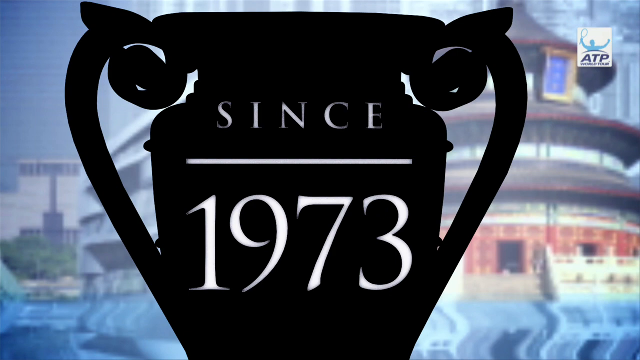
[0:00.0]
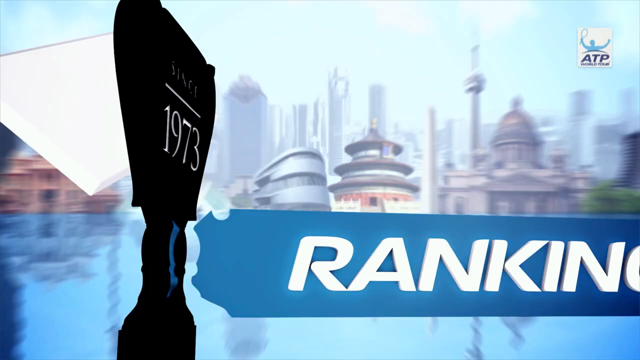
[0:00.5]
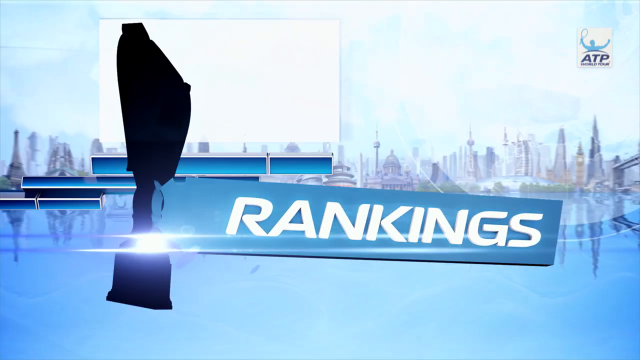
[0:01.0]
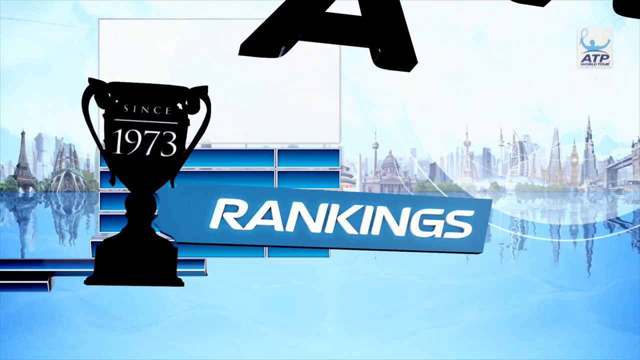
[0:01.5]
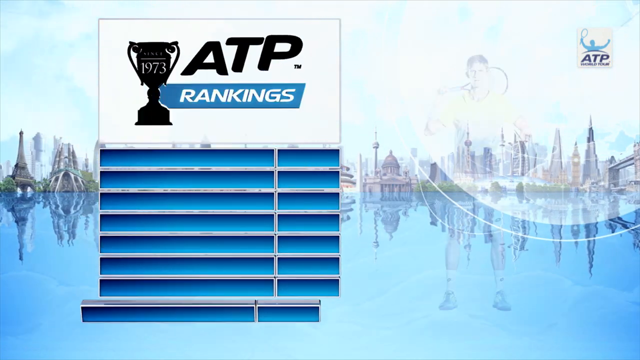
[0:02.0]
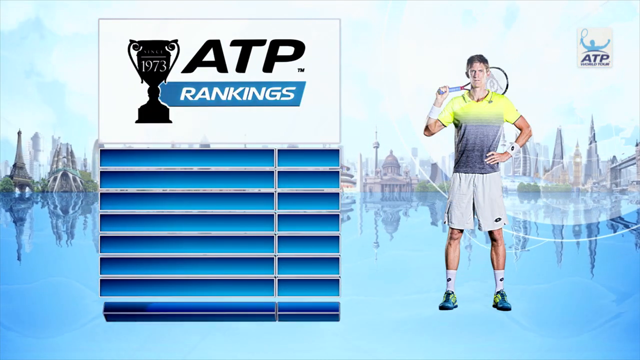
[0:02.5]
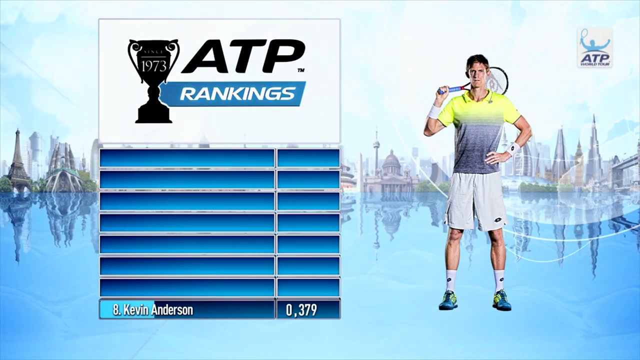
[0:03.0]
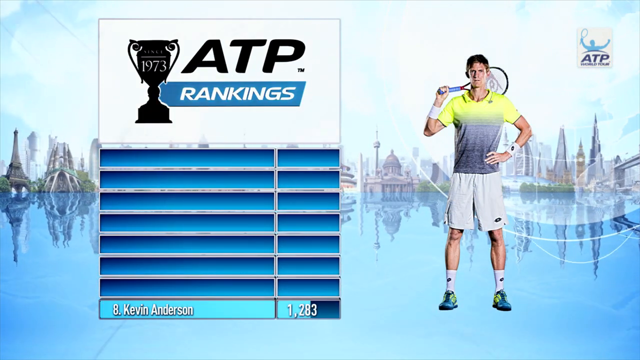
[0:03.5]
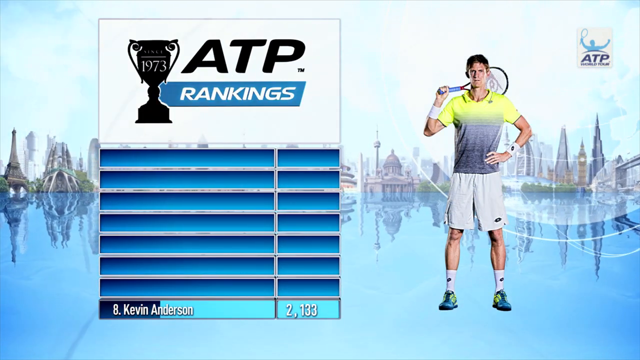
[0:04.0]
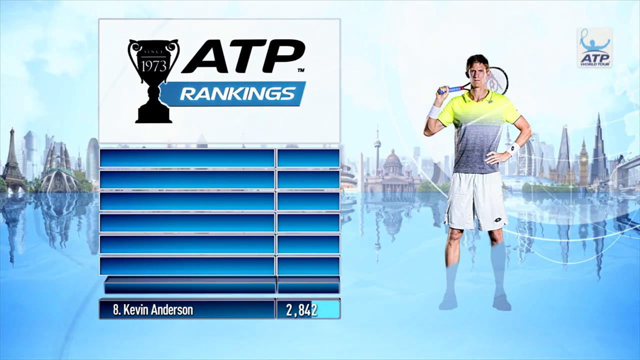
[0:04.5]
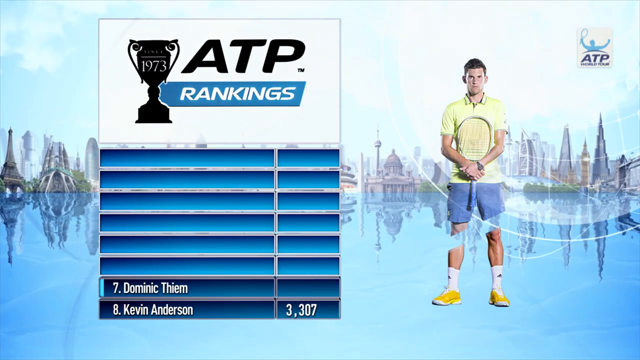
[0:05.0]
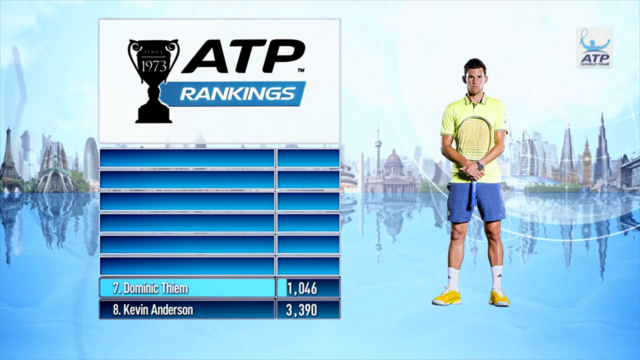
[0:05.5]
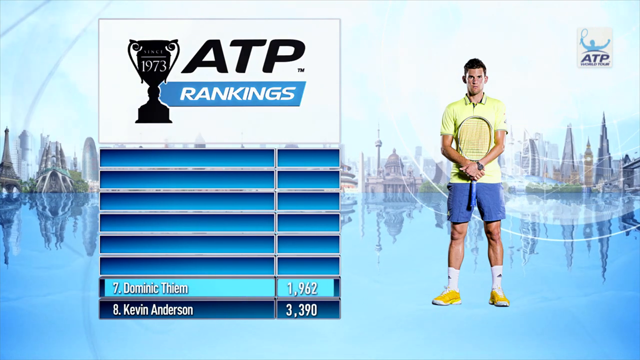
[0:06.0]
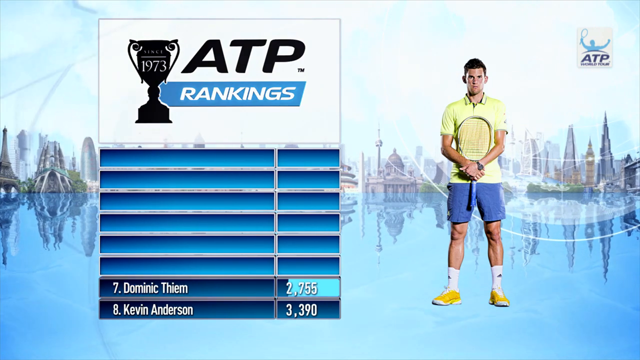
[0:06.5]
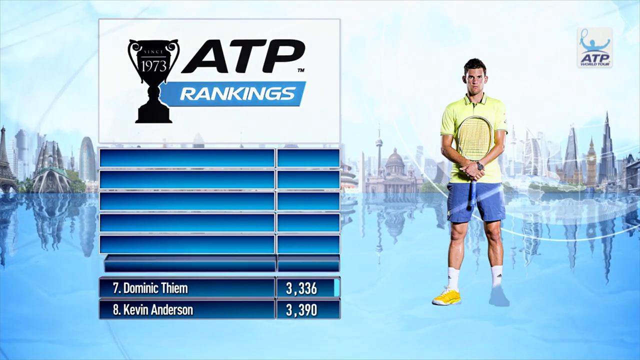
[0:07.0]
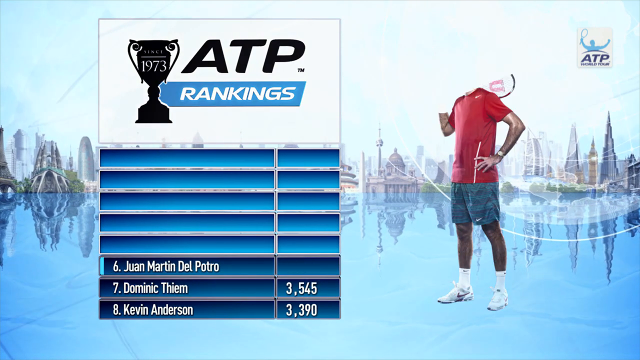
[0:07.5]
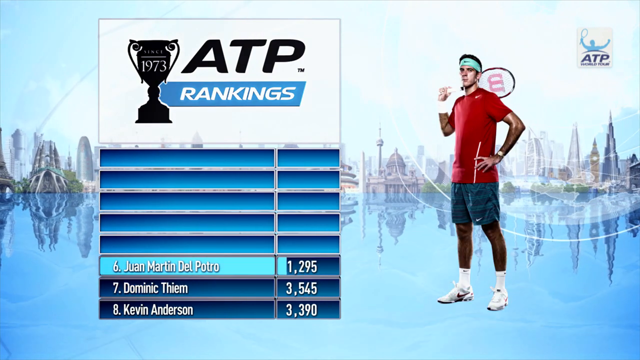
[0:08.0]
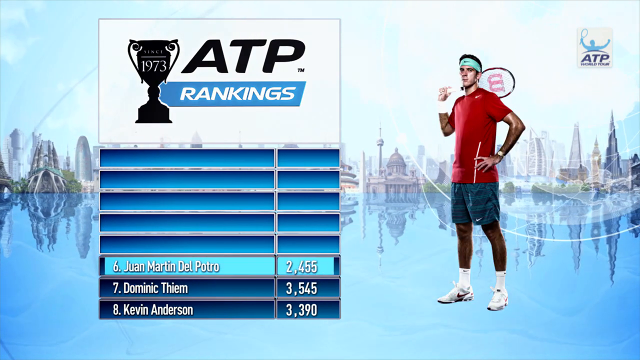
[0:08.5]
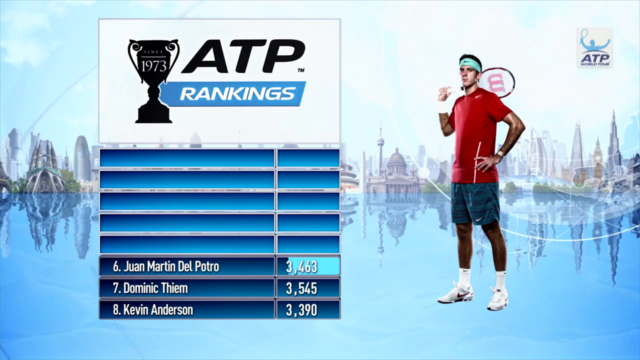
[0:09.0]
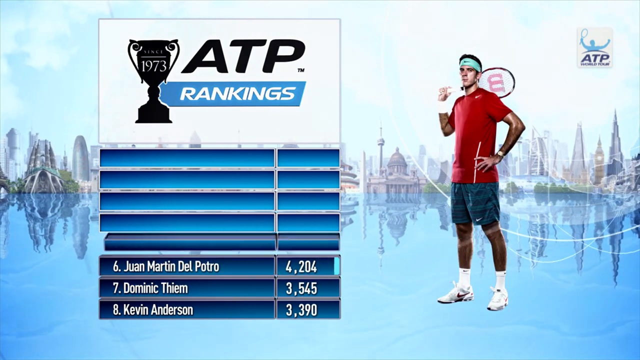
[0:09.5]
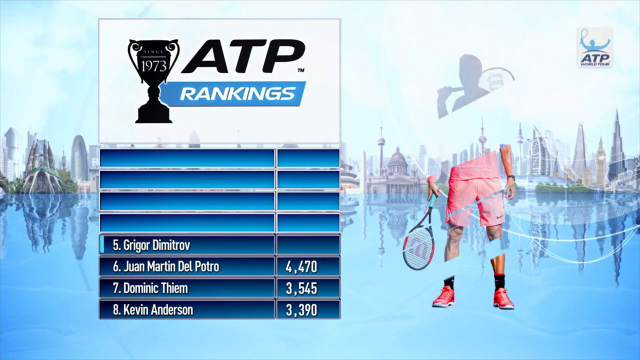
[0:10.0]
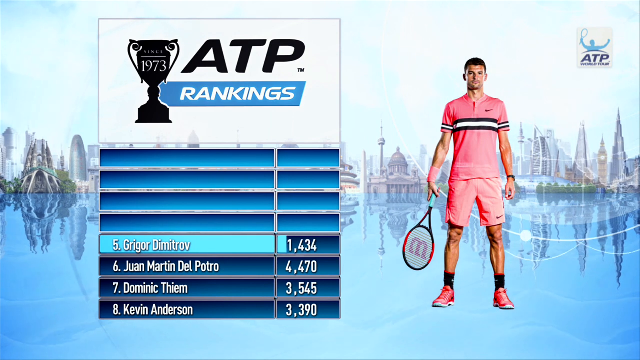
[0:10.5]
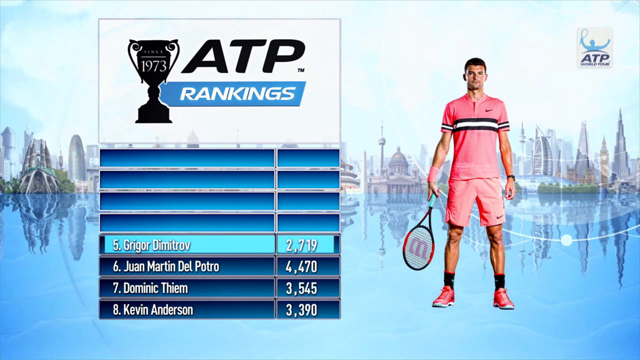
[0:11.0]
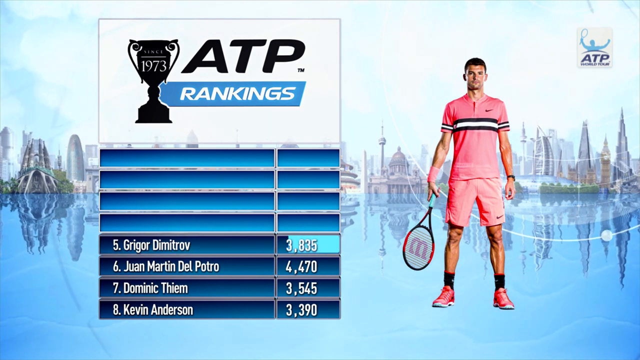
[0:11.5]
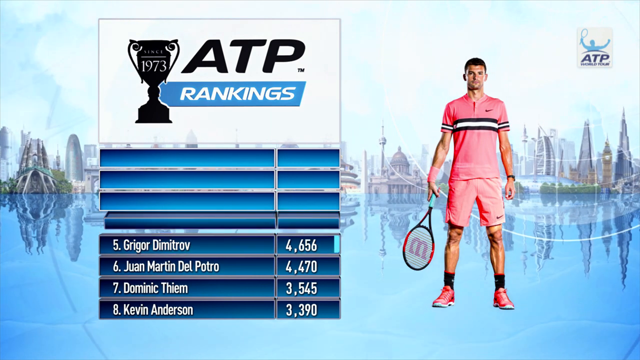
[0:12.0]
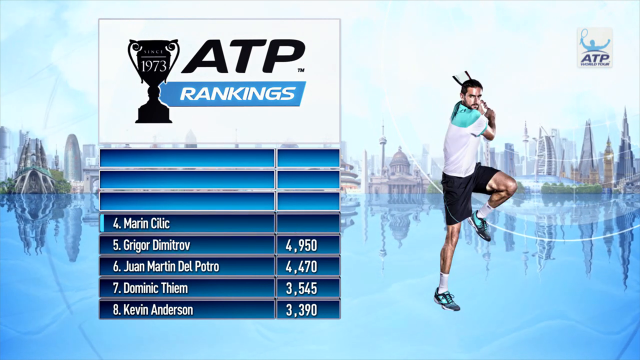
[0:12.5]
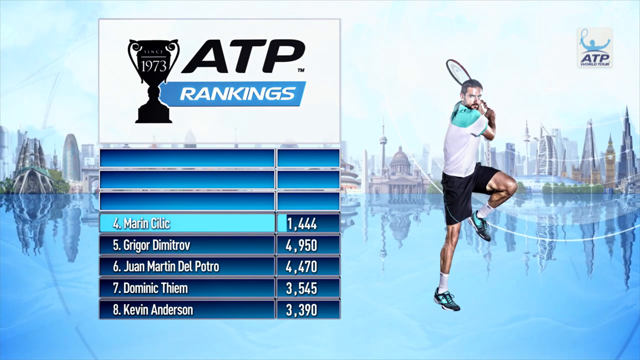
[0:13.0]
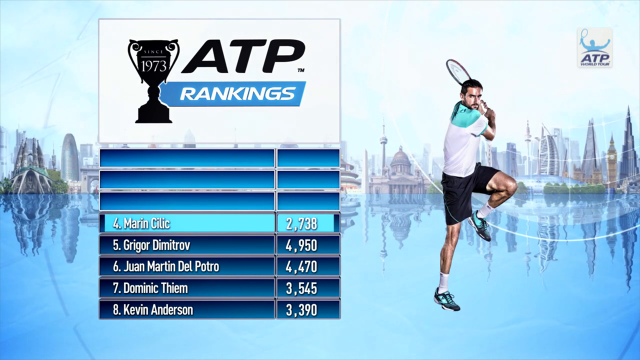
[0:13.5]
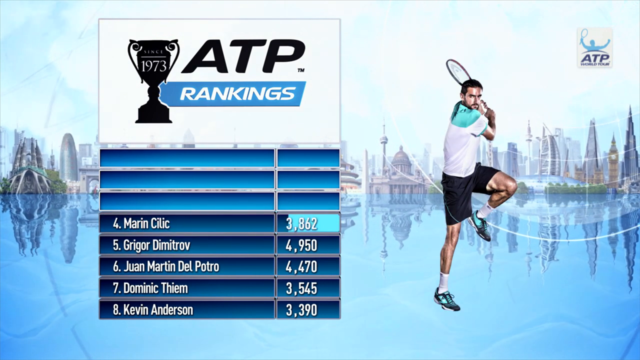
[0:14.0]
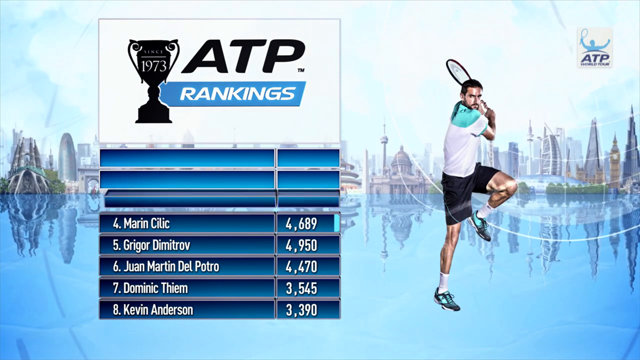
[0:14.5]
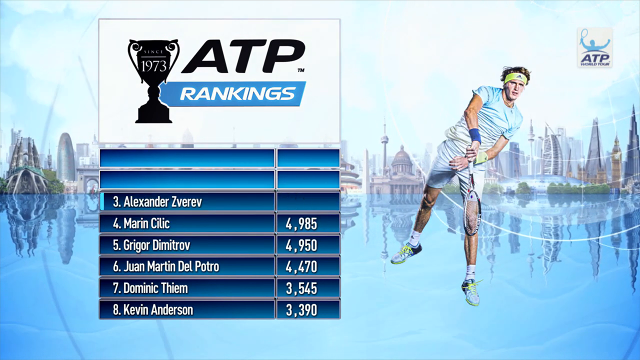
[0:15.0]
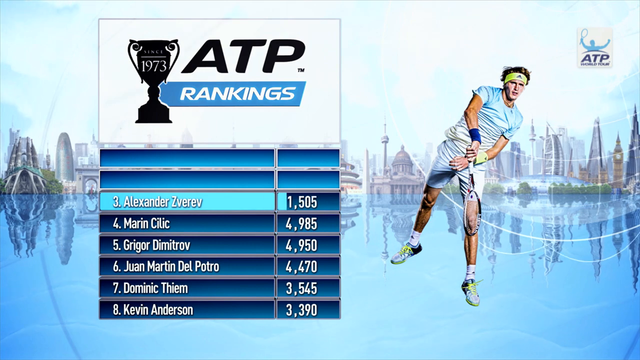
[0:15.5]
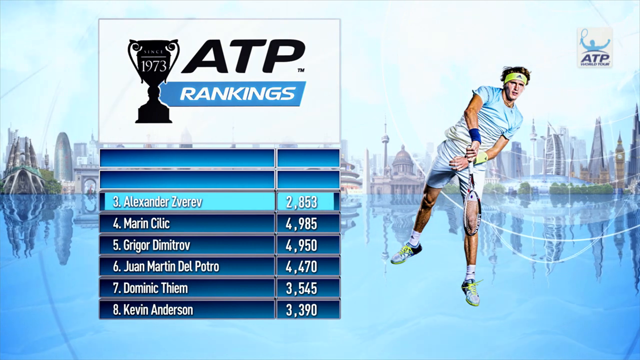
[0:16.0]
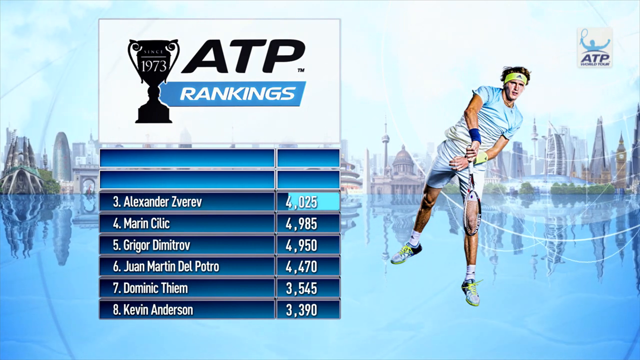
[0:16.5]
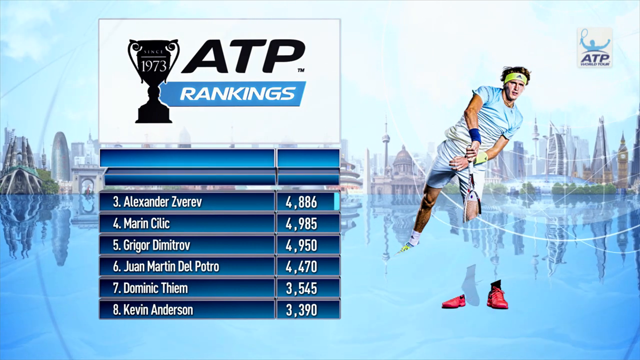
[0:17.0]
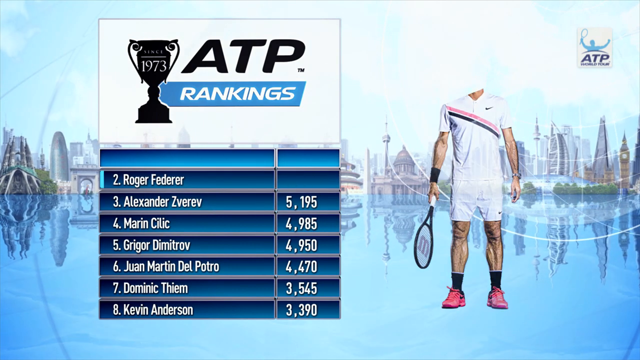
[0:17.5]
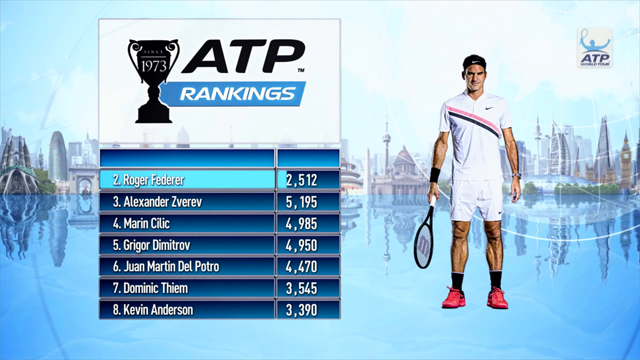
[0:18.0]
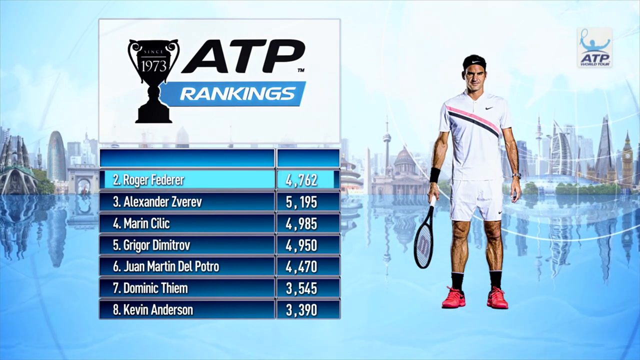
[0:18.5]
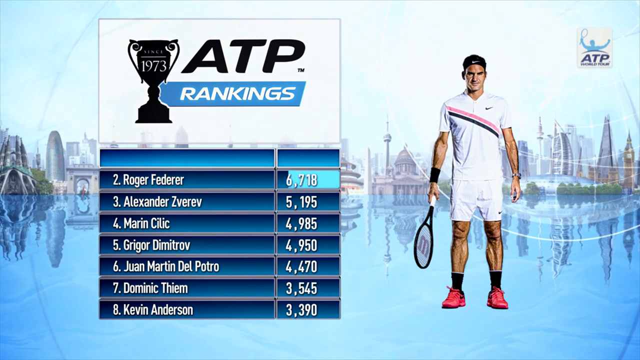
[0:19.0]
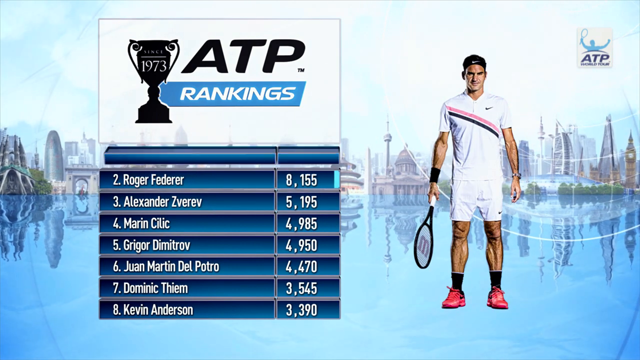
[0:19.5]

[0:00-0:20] The video opens with what might be taken as footage from a TV sports report on tennis. It begins with the silhouette of a prize cup taking up a very large part of the screen; the top part of the cup is visible, with "since 1973" written on it in white. Graphics of a daytime location are faded out in the background. The view pulls back to show the entire cup, which is computer rendered and spins round as it moves to the left of the screen, while a graphic appears next to it: a blue rectangle with the word "rankings" in it. The cup and the rectangle then move up to the top left of the screen to read "ATP rankings", and a grid forms underneath. To the right is a photograph of a male tennis player standing at full height in a yellow and grey t-shirt, white shorts and green shoes, with his left hand on his hip and his right hand holding a tennis racket balanced over his shoulder behind his head. The background is a montage of different international locations, including the Statue of Liberty, the Taj Mahal and Tower Bridge, at the far side of an expanse of water, and the player is superimposed over the water. The bottom row of the grid lights up with "8 Kevin Anderson" and, to the right, the number 3390. A different male player then appears on the right, wearing a yellow top, blue shorts and yellow sneakers, holding his racket against his stomach with his arms crossed in front of it. The grid updates to the row above with "Dominic Thiem" and the score 3545. This player fades out and another male player appears on the right in a red t-shirt, dark blue shorts and white trainers, standing at a slight side angle showing his left side, with his left hand on his hip and his racket held back on the back of his neck behind his head. The listing updates to "6 Juan Martin Del Potro" with the number 4470. Animation of what seems to be a spinning globe appears behind the players as this player is replaced by another male player in a pink t-shirt and pink shorts; the shirt has a black, white, black stripe horizontally across the middle and onto the sleeves. He stands with his legs apart, holding a racket straight down in his right hand. The chart updates to "5 Grigor Dimitrov" with 4950. This player blinks out and is replaced by another male player in a white t-shirt with green shoulders, dark blue or black shorts and dark trainers. He stands on his right leg with his right side facing the viewer, his left leg bent so his knee is up at waist level, swinging the racket from his left behind his head as if to swing it toward the viewer. His name appears at the top of the list: "4 Marian Gilić" with 4985. The image then changes to another male player in a light blue top that fades into white and white shorts, with a green hairband. He appears to be leaping in the air with his right leg higher, almost facing the viewer, swinging his racket down with his right hand toward his knee as if he has just returned a shot. His name appears at the top of the list: "3 Alexander Zverev" with 5195. He is replaced by a male player in a white t-shirt and white shorts, with a black or dark blue and pink horizontal stripe on the t-shirt running from the top of his right shoulder to underneath his left arm. He stands square on in red trainers with both hands down by his sides, holding the racket in his right hand. On the left his name appears above the others: "2 Roger Federer" with the number 8670.